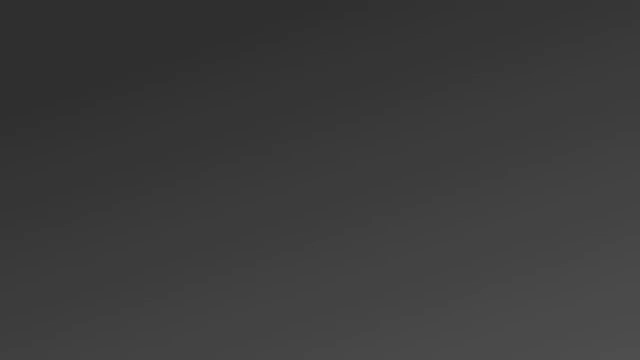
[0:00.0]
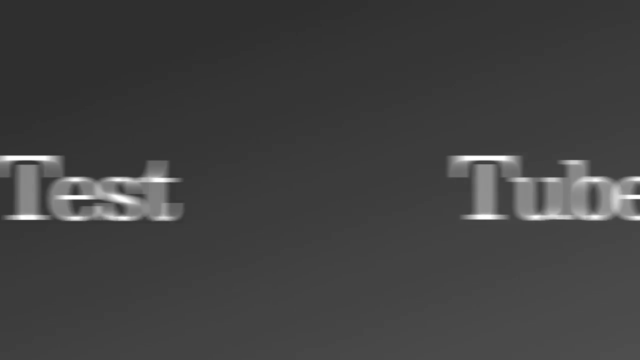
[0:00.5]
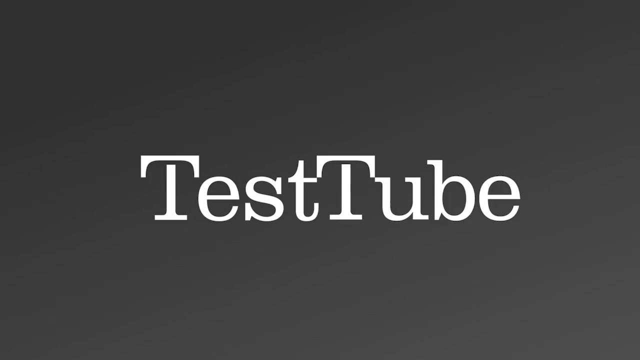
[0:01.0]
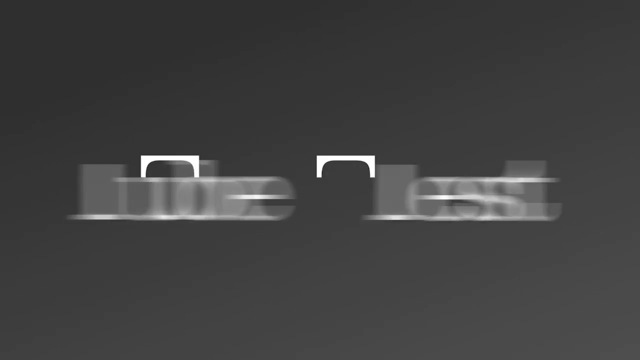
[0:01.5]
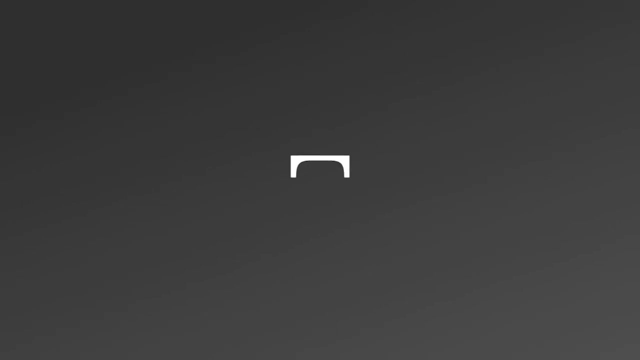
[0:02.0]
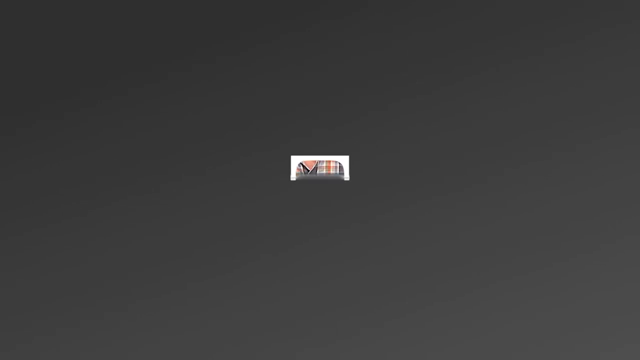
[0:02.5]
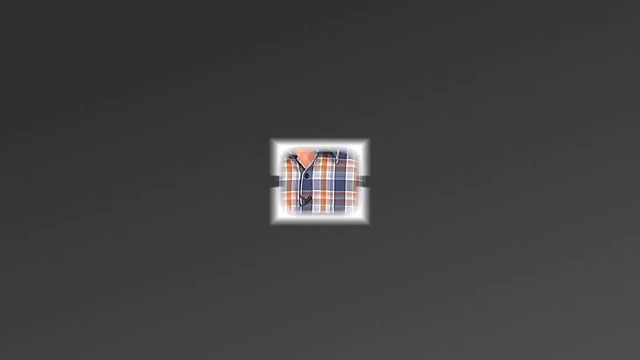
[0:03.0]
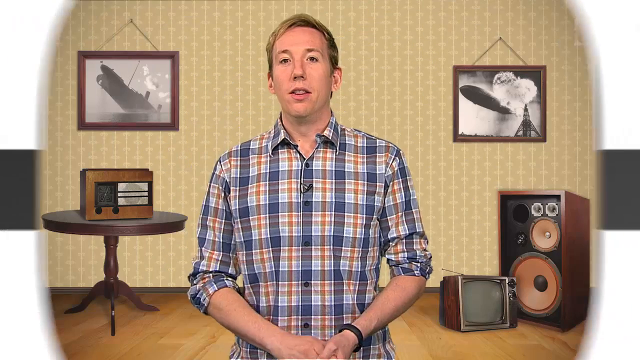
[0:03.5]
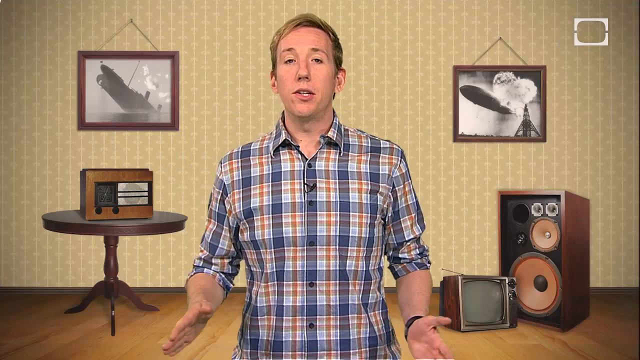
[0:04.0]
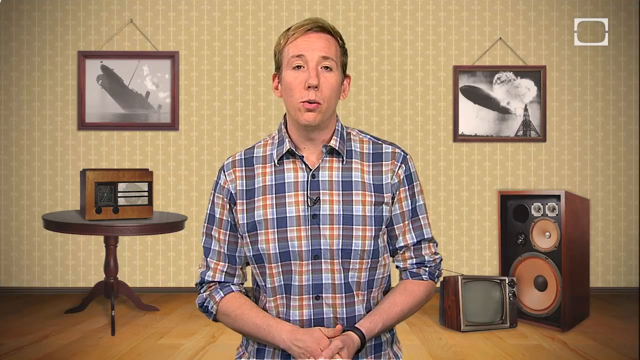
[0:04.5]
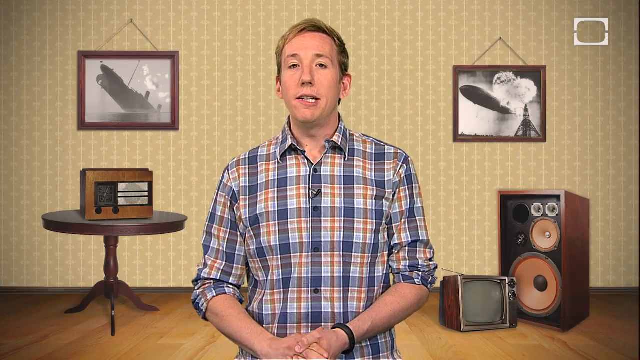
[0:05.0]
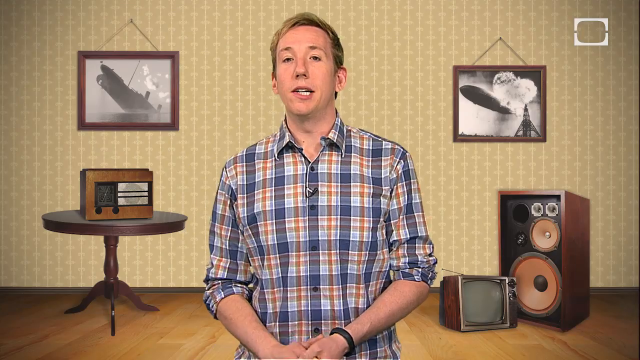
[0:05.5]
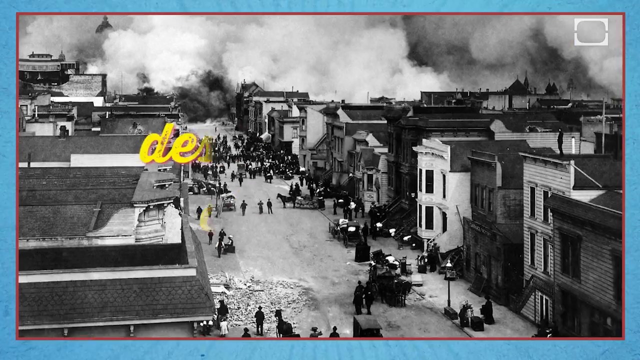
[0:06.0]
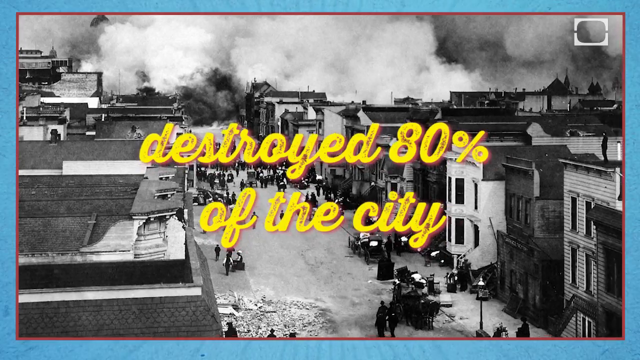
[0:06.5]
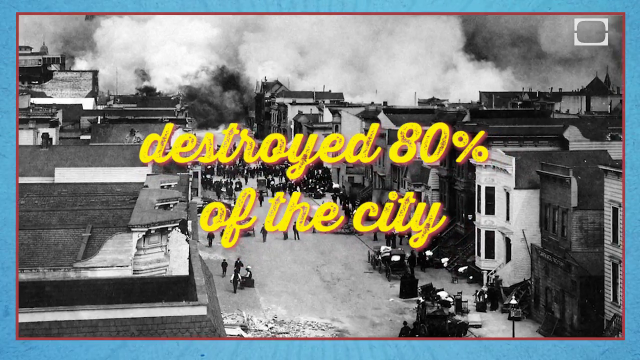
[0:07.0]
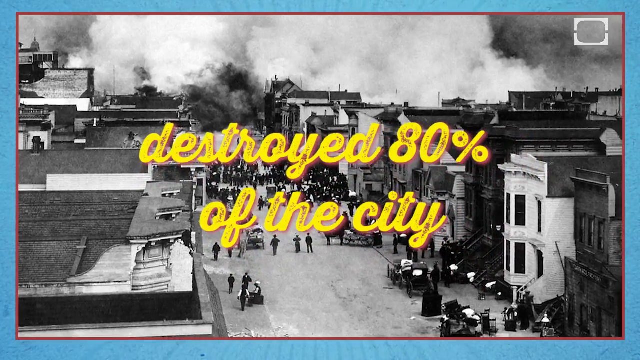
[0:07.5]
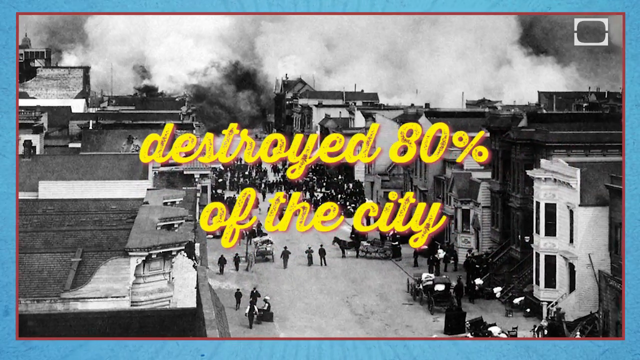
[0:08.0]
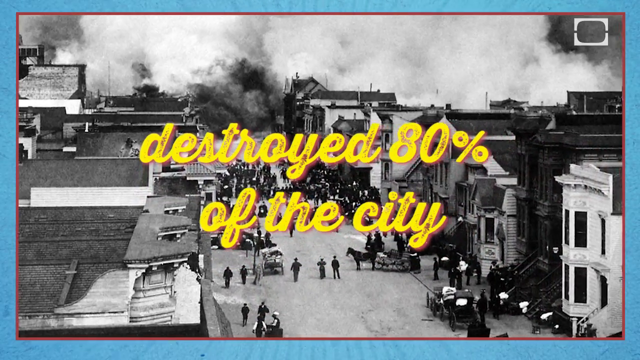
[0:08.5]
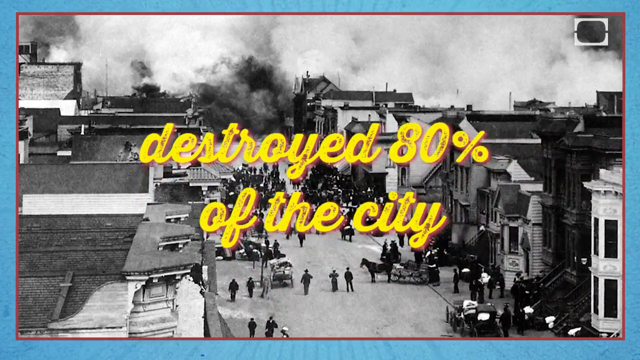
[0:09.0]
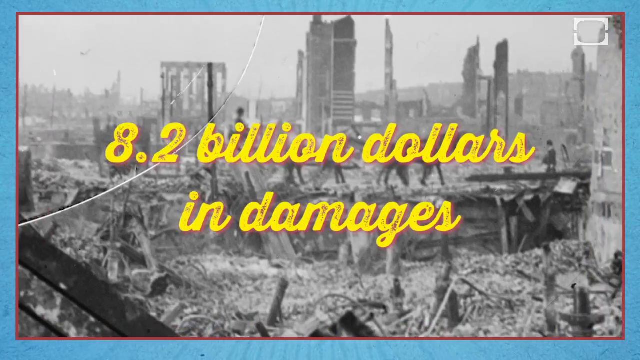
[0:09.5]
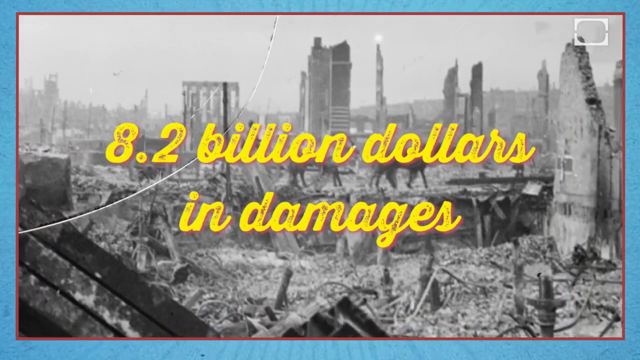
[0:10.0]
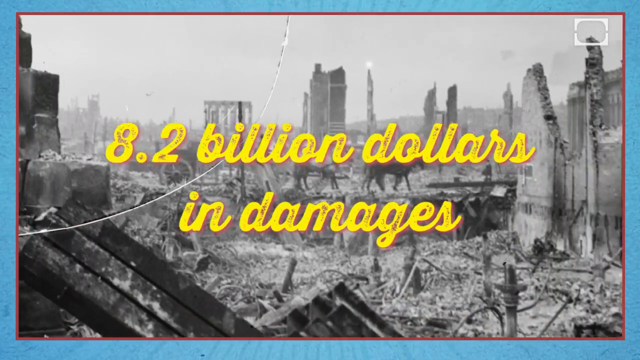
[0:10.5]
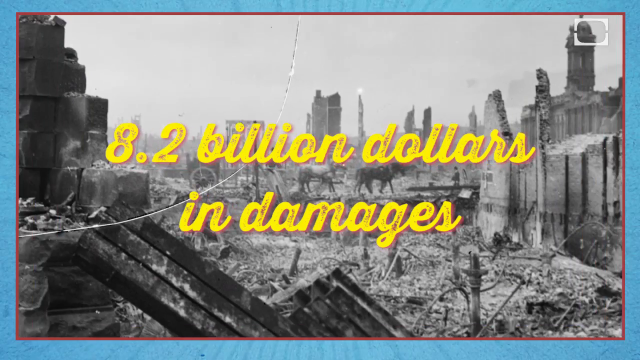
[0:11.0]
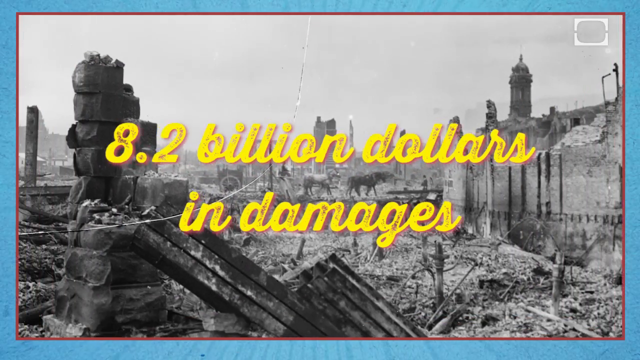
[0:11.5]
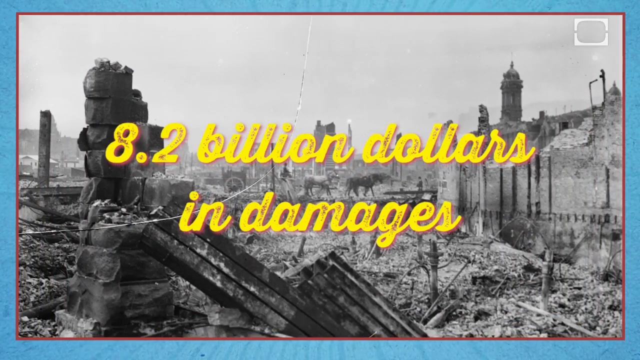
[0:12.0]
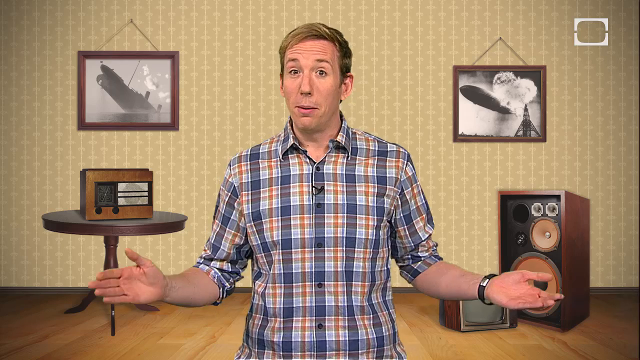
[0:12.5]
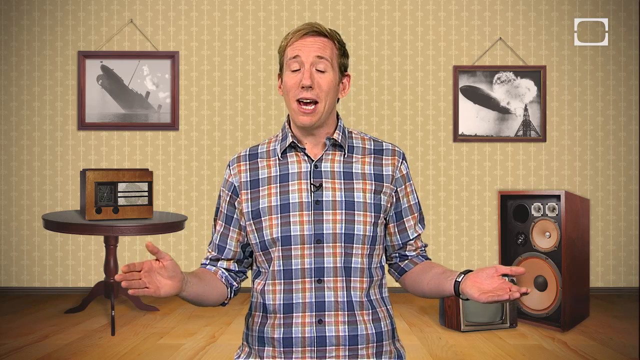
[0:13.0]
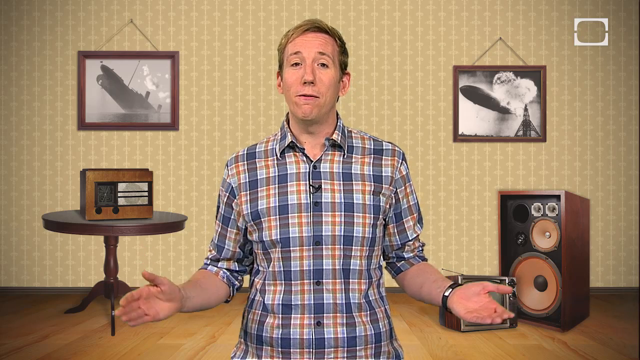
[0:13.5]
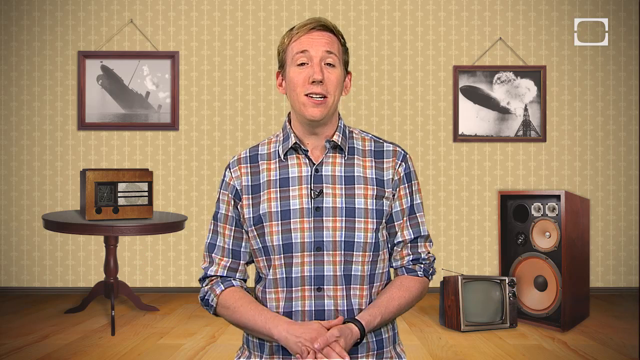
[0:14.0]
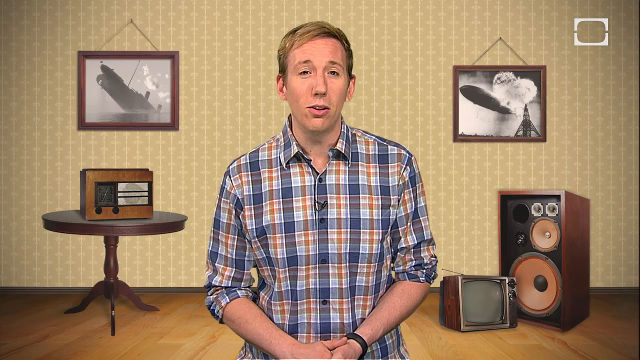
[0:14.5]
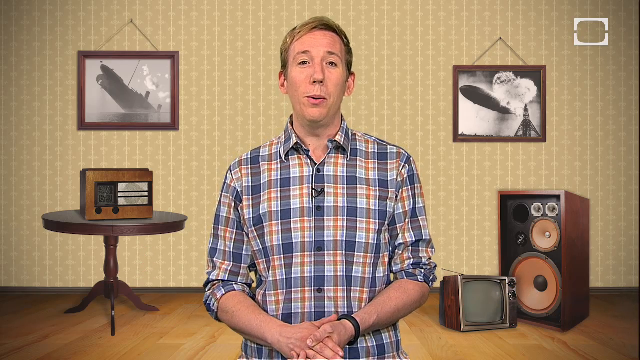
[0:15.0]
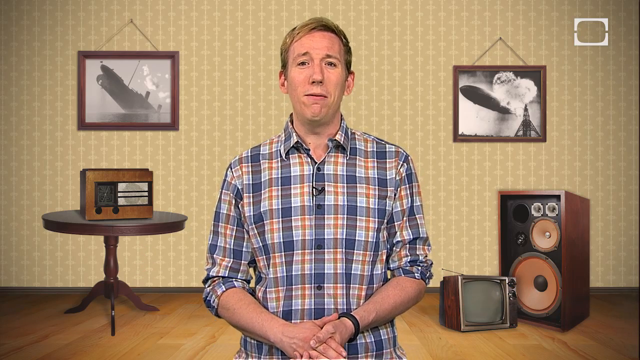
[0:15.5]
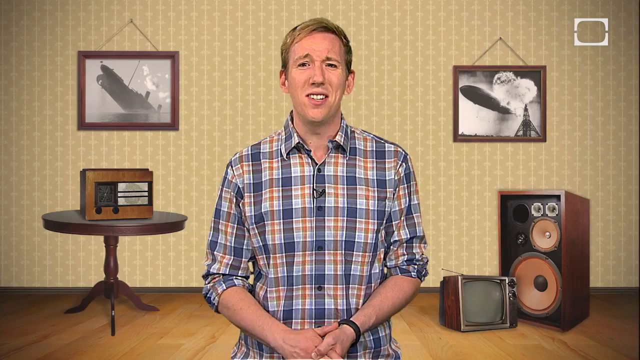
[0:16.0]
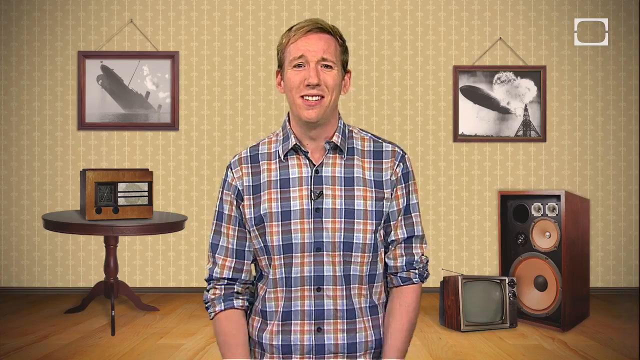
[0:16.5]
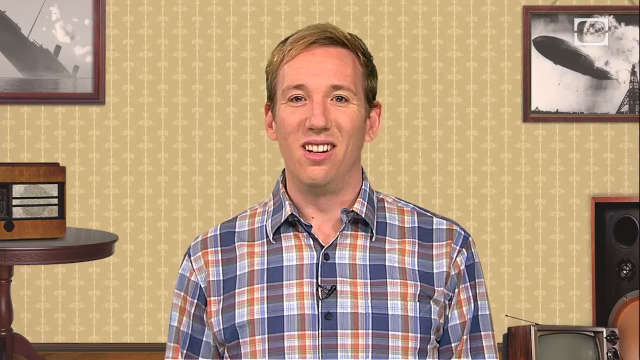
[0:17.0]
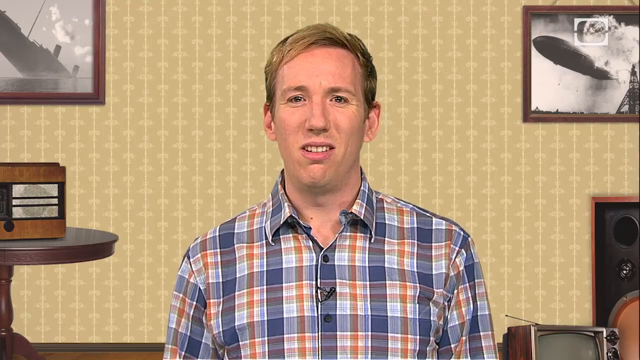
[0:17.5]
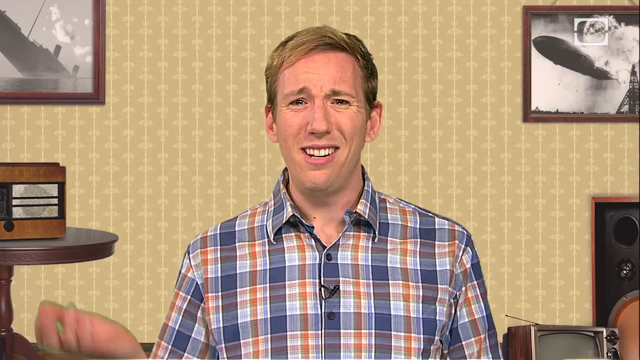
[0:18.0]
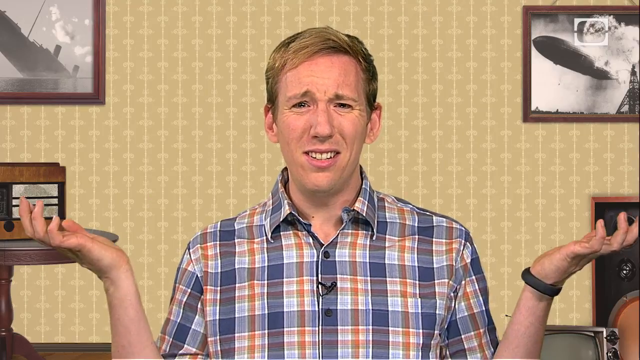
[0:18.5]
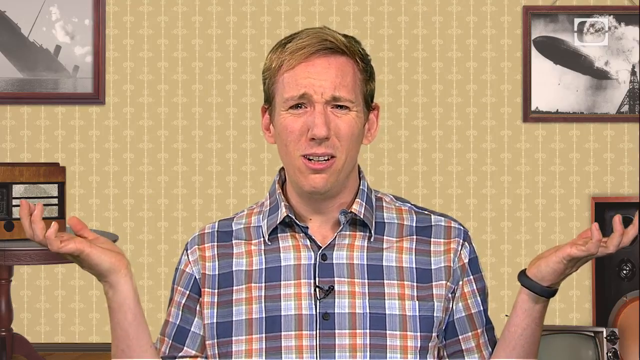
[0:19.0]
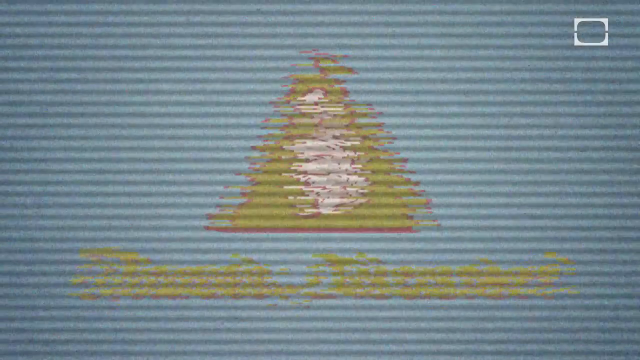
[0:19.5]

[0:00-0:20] The video opens with an intro transition in which two words, "test" and "tube," come together: "test" comes from the left side and "tube" from the right, and they connect. The tops of both capital T's fuse together and become a square shape, and then the view zooms in, in a TV-like fashion. Next, apparently the host of the video is talking, standing in front of a green screen with a background right behind him. Then a couple of black and white pictures appear with some stats in the middle, such as "destroyed 80% of the city."